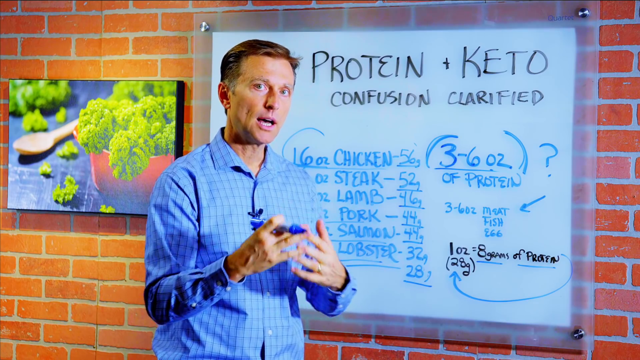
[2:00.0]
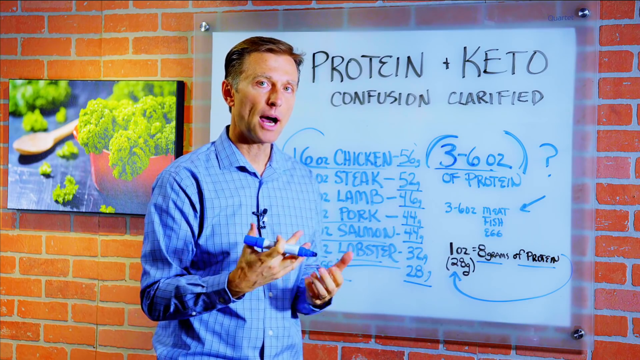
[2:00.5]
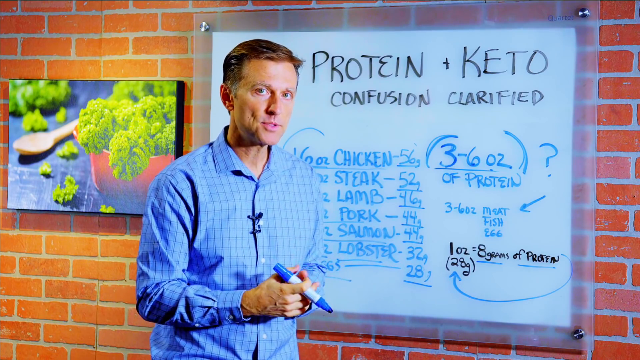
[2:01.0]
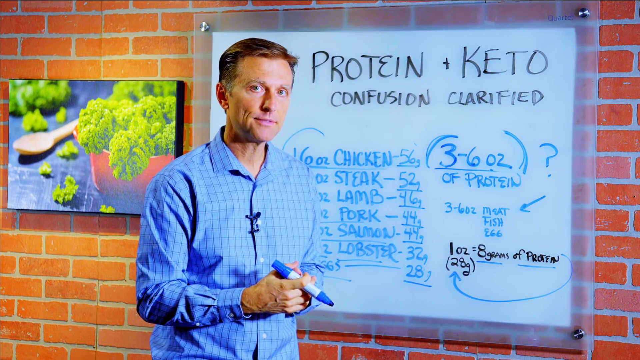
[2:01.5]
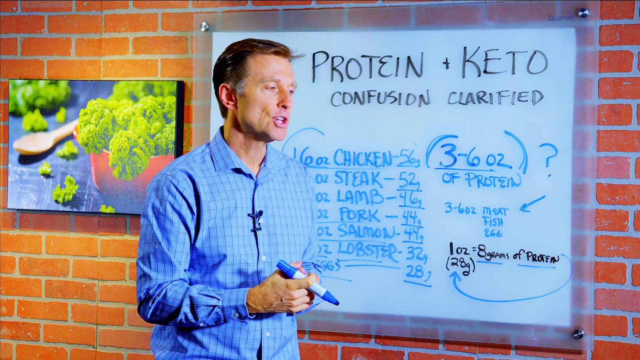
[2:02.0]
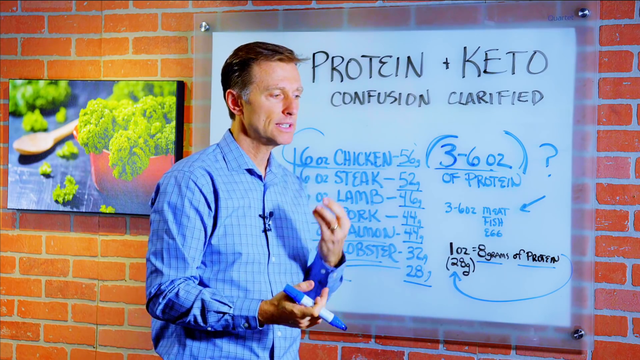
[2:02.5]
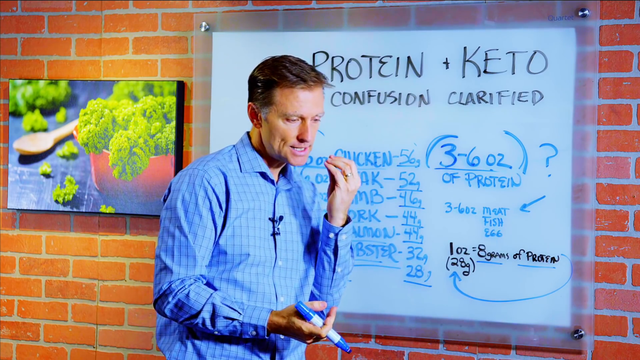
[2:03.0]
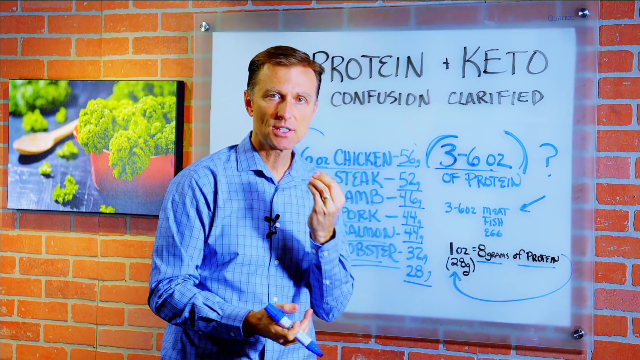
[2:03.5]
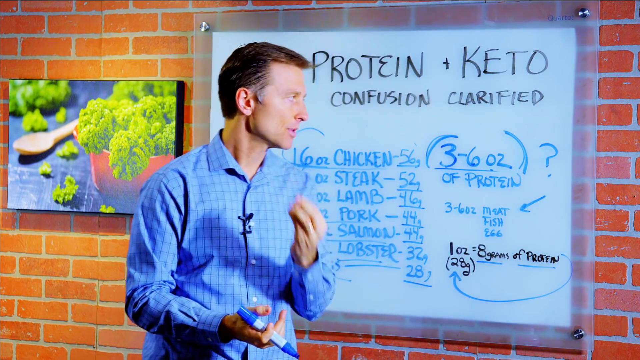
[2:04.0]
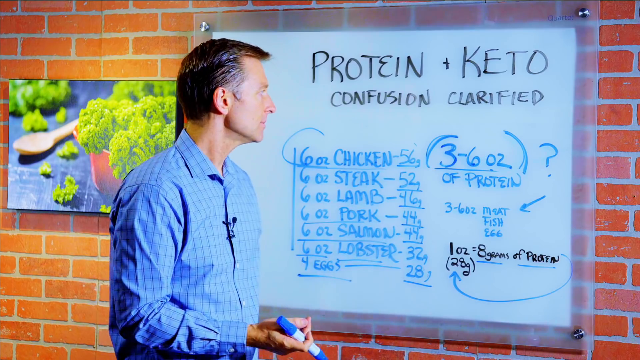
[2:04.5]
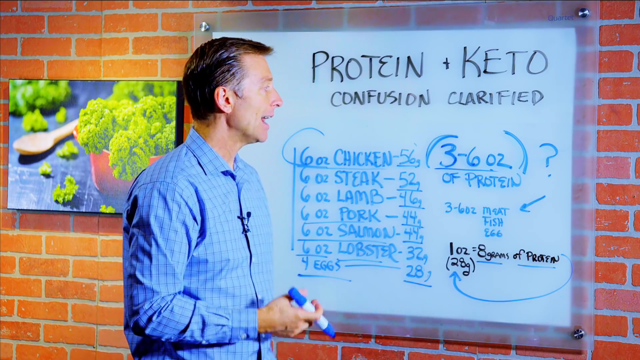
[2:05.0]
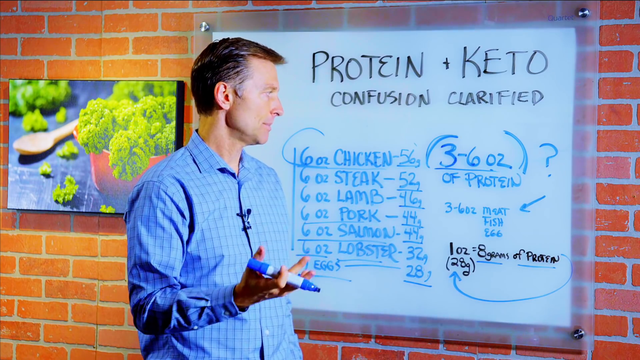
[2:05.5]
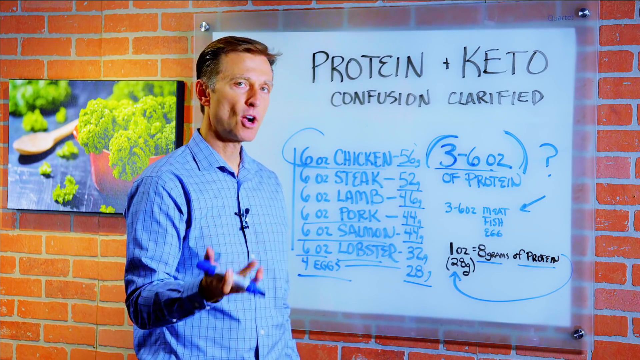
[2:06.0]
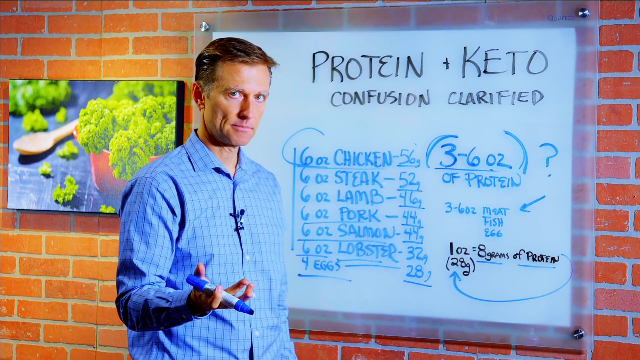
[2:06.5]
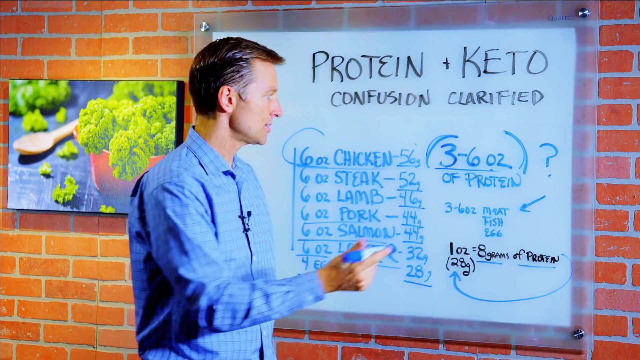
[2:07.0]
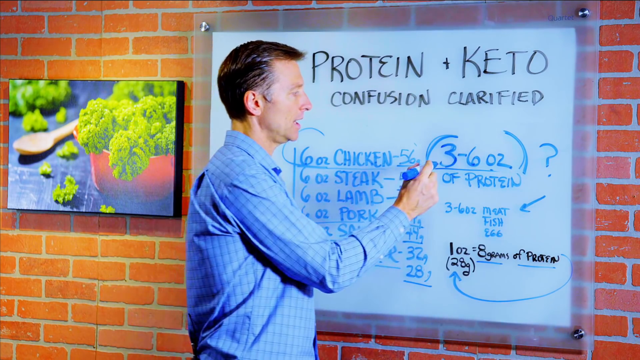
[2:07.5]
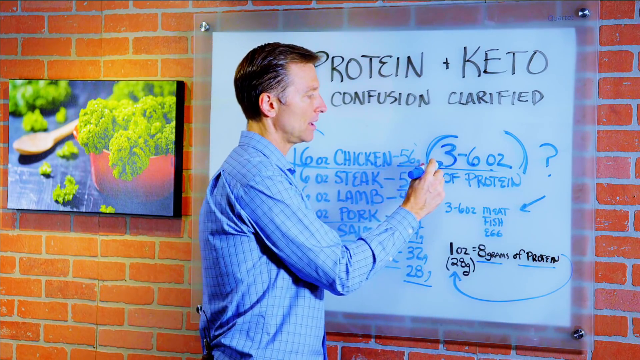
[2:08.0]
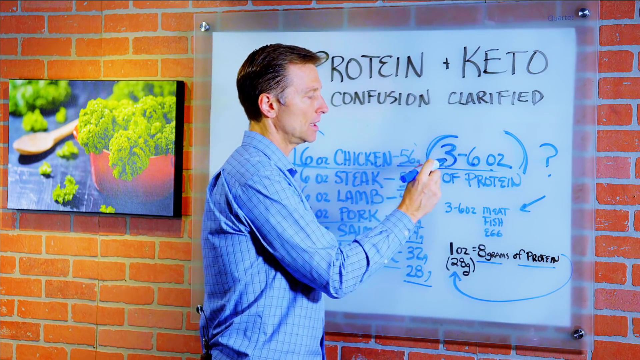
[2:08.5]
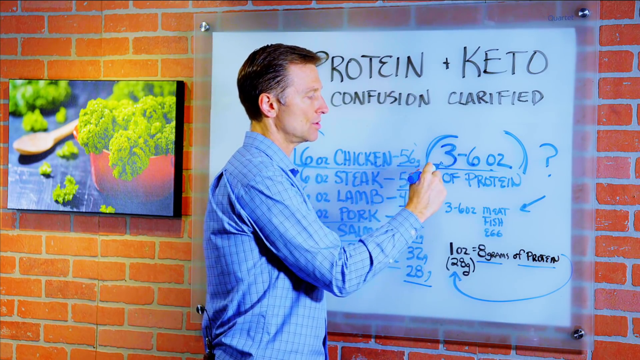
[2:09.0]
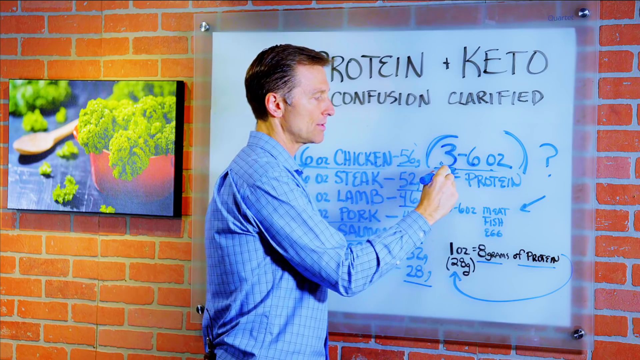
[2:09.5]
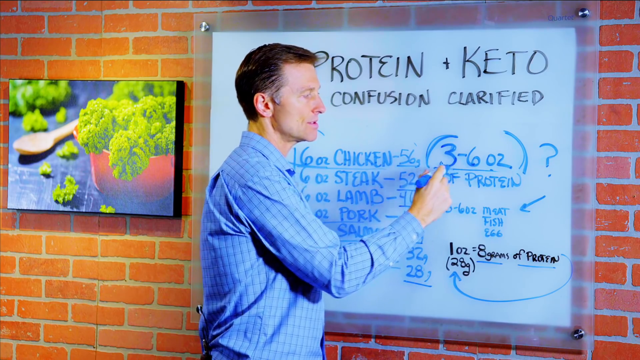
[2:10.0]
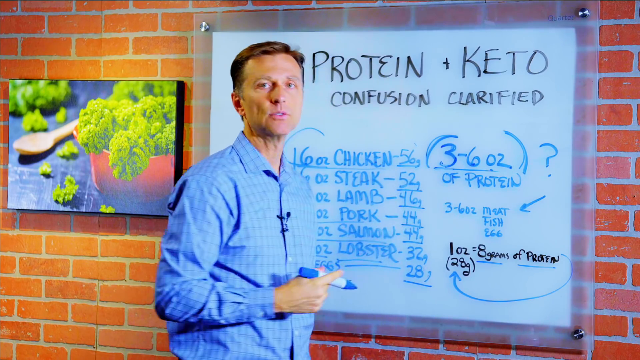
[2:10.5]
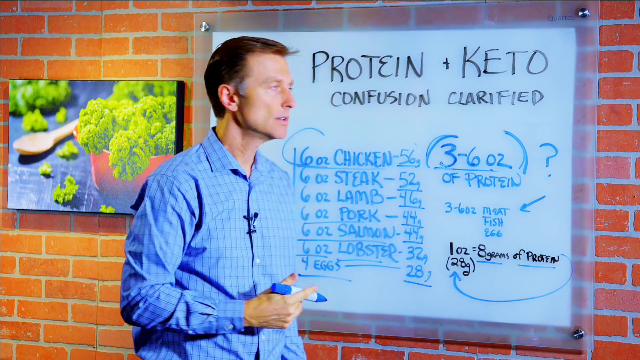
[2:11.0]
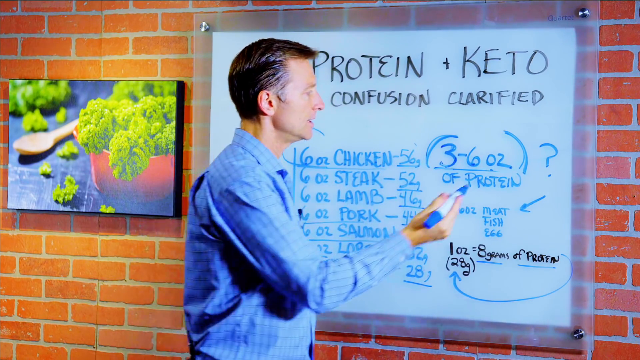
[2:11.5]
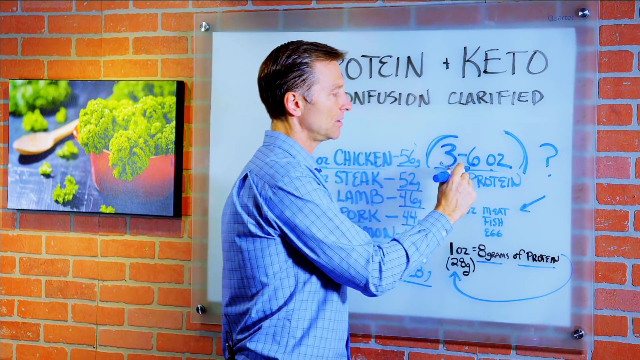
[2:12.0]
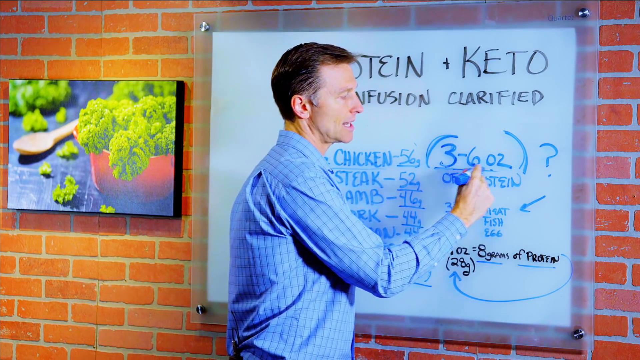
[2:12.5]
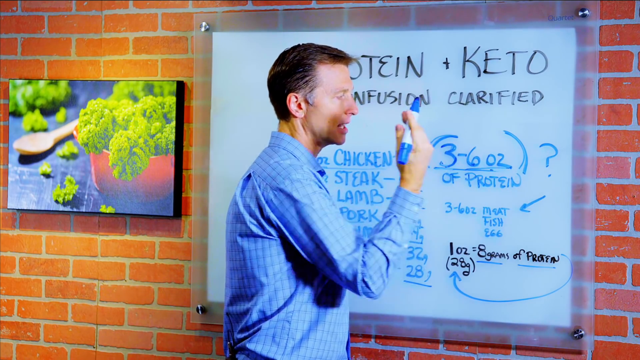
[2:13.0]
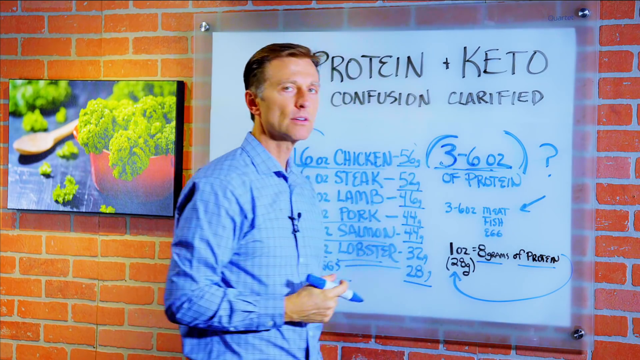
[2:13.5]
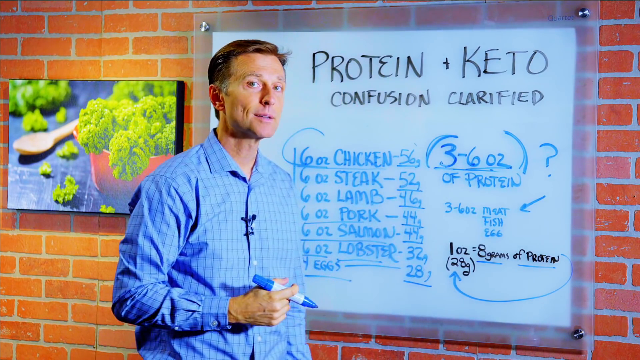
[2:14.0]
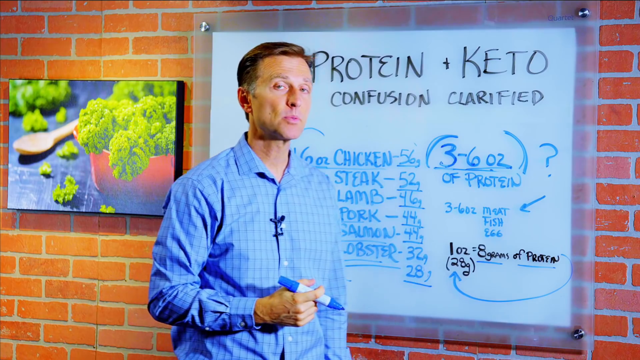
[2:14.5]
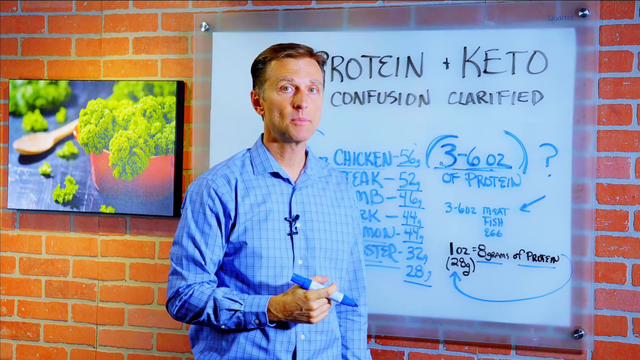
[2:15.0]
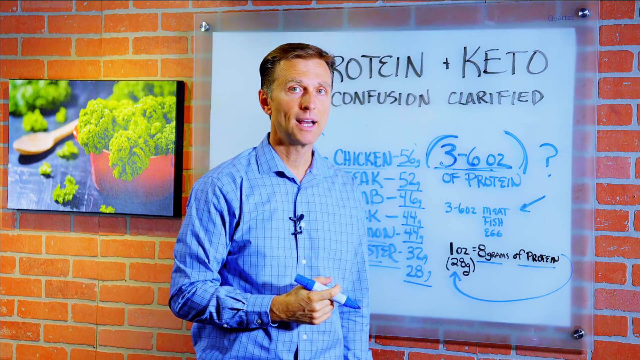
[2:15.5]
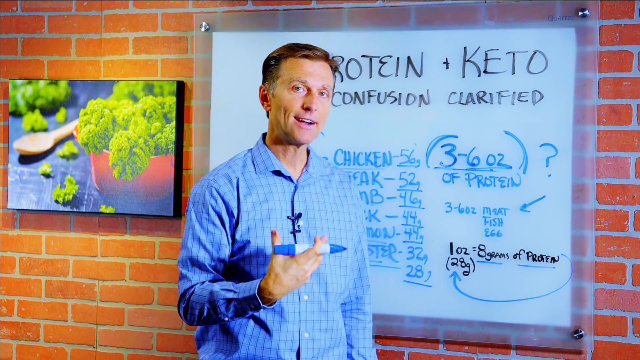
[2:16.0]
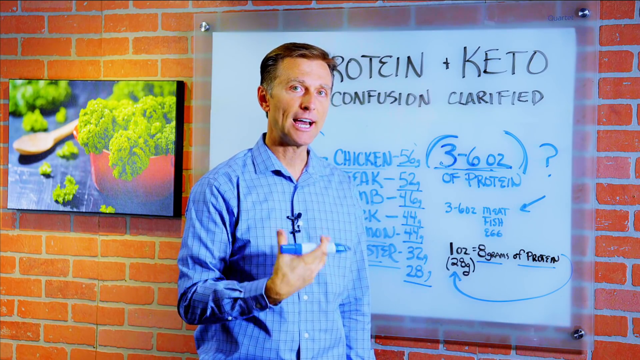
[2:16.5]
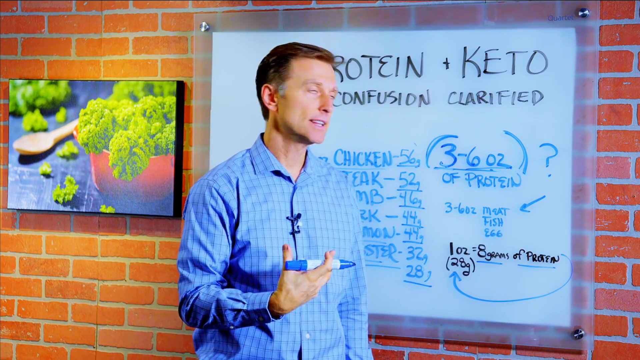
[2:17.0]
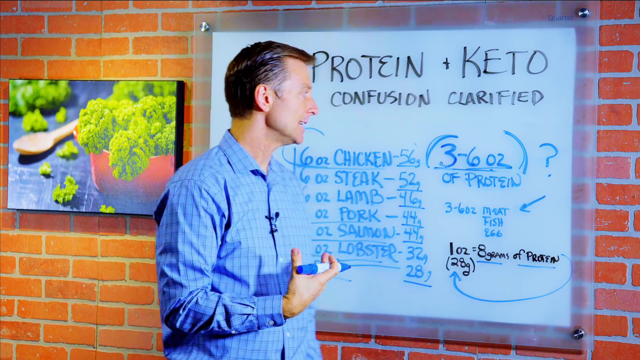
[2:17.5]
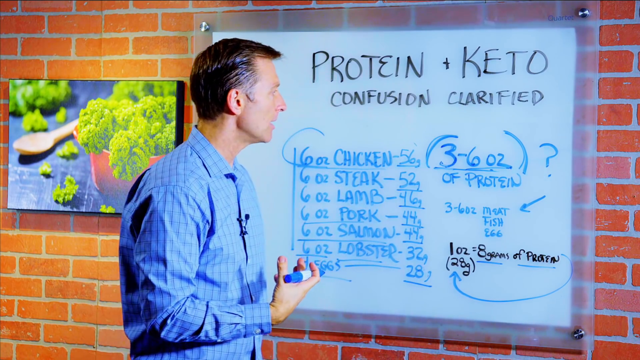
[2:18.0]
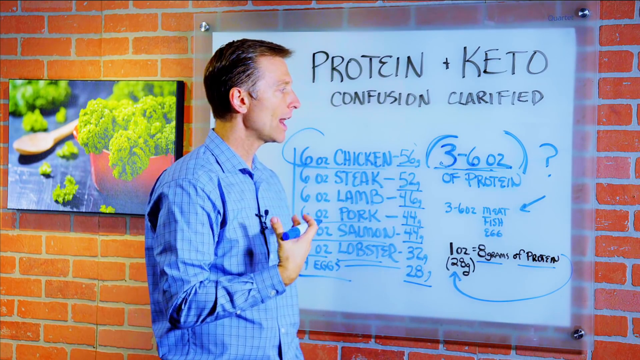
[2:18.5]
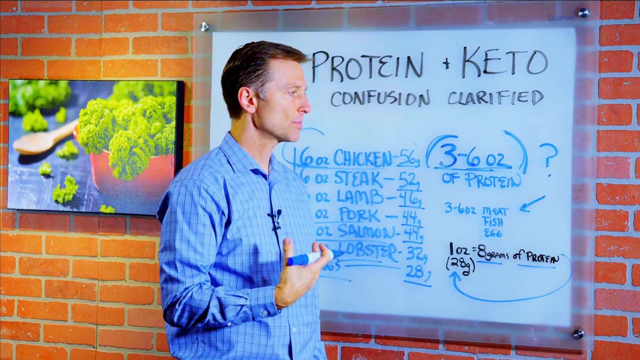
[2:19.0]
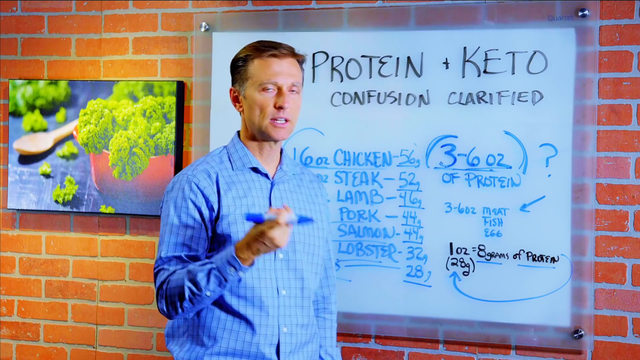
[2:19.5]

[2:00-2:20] The man is fully turned away from the whiteboard, explaining his points purely to the camera. He still has the marker open and points while moving his hands toward his mouth and out in front of him. He turns back and re-explains certain points on the whiteboard while underlining them, especially "three to six ounces of protein", which he has put in parentheses and darkened much more than the rest. He holds the marker up to the other row of proteins he has listed, then turns back toward the camera to explain. He holds his hand up in front of his chest and stands as though making a point, holds his hands up toward his mouth, then turns back to the board to point again at "three to six ounces of protein" before dropping his hand with the open marker to his side. He continues speaking using only the hand that is not holding the marker, then steps back so all of the text on the whiteboard is visible.